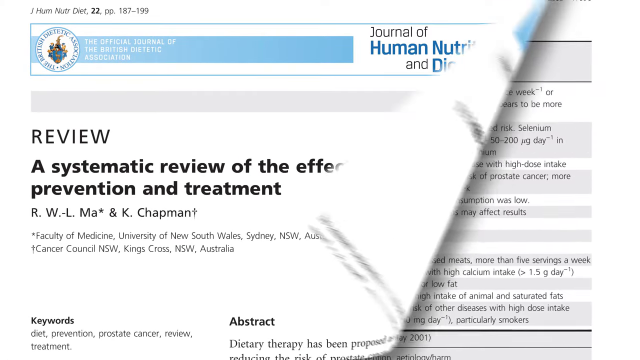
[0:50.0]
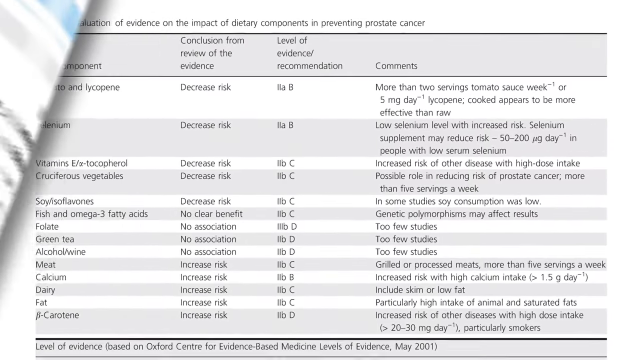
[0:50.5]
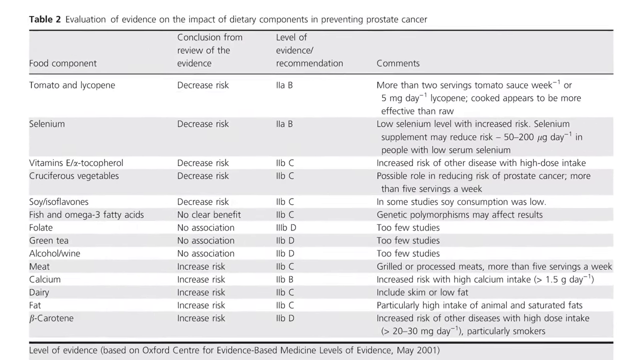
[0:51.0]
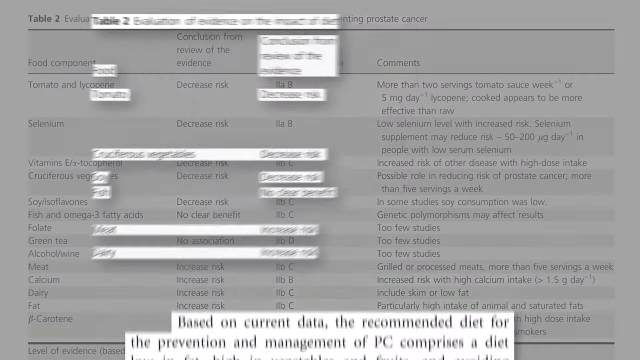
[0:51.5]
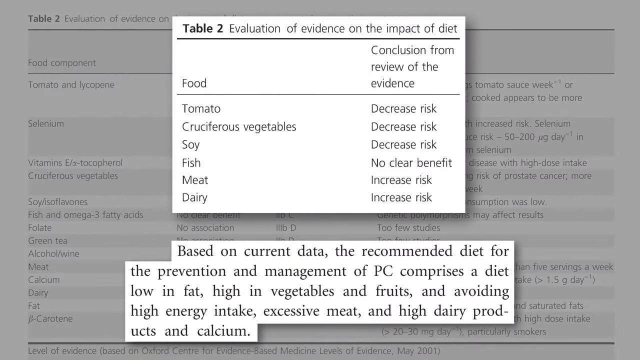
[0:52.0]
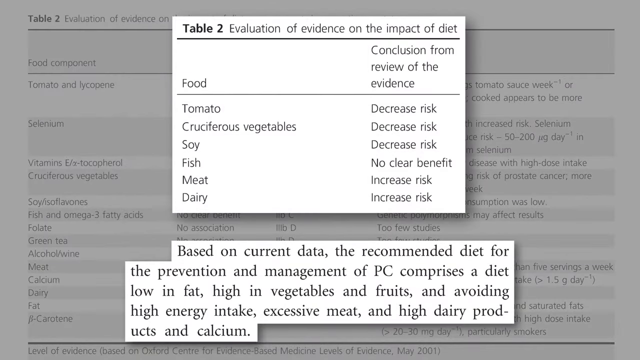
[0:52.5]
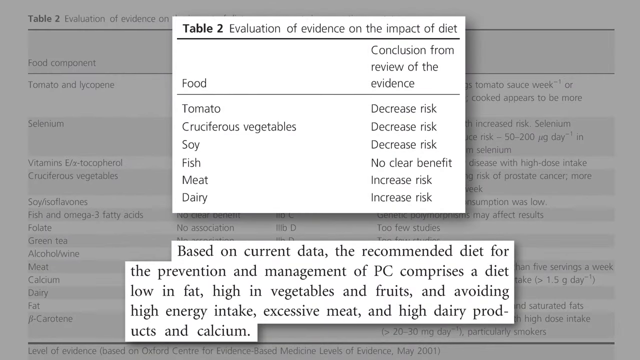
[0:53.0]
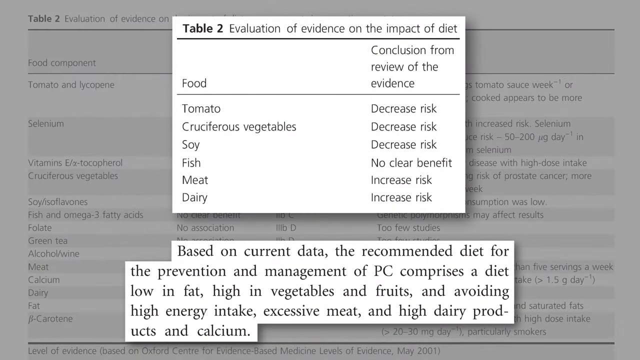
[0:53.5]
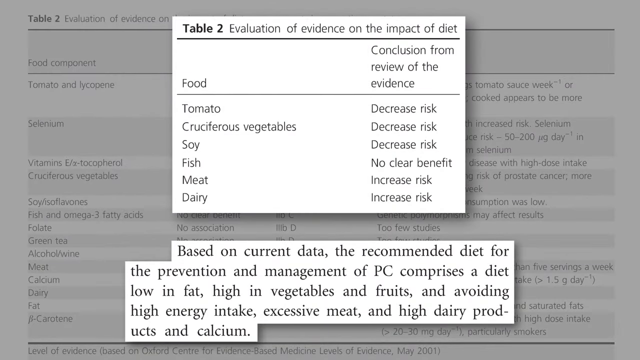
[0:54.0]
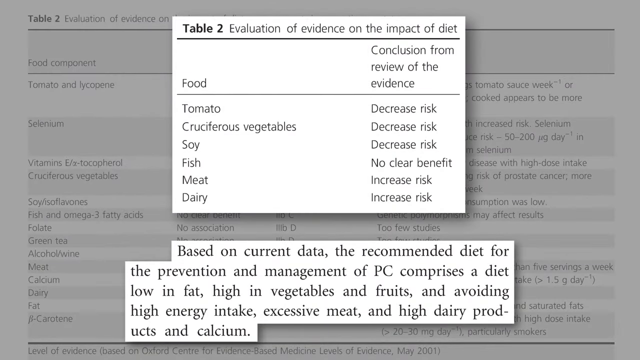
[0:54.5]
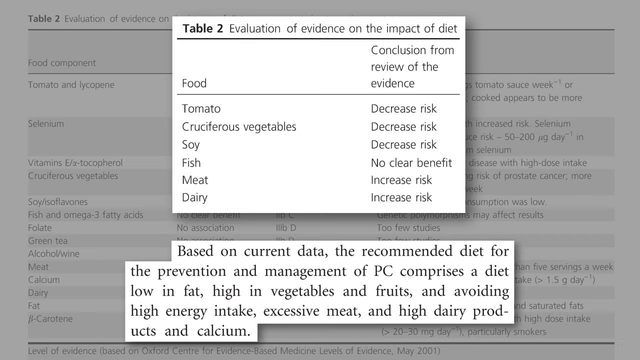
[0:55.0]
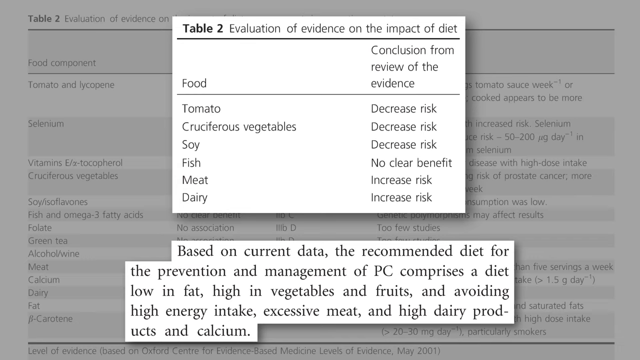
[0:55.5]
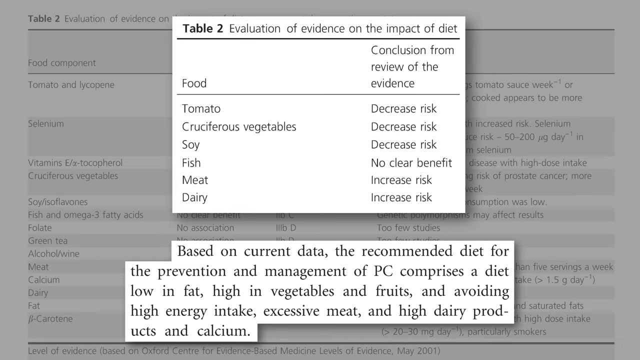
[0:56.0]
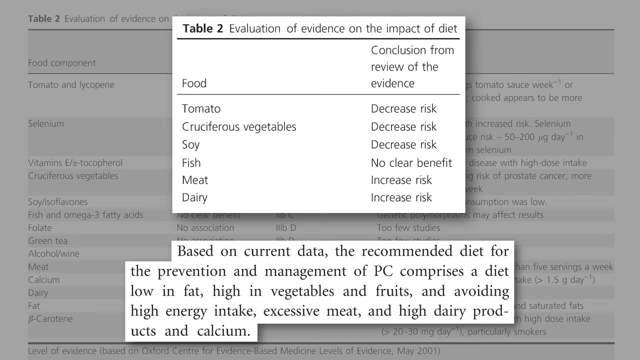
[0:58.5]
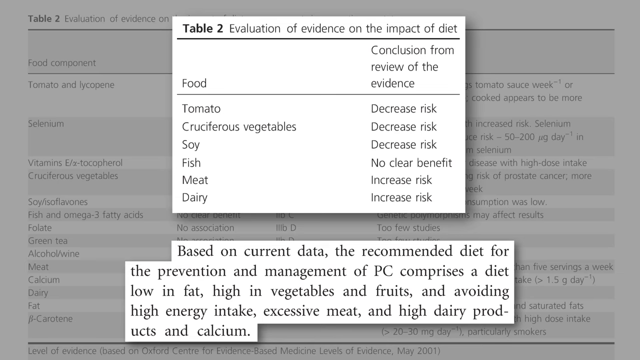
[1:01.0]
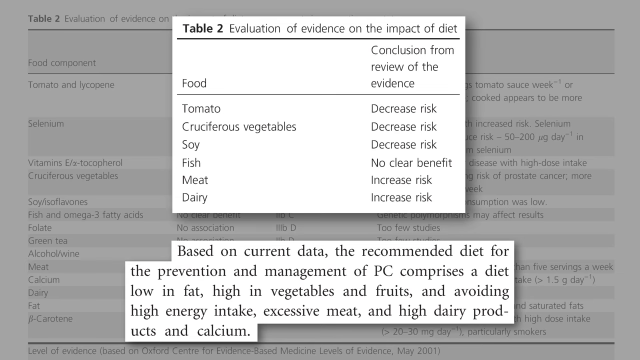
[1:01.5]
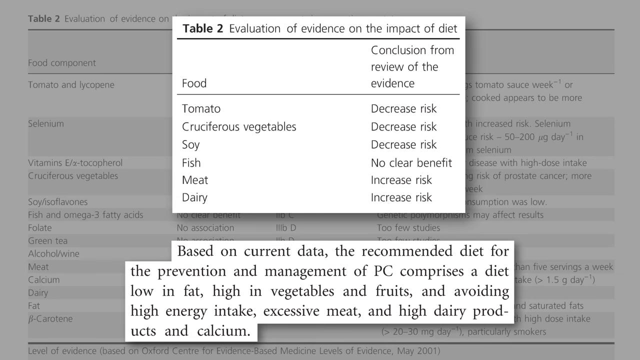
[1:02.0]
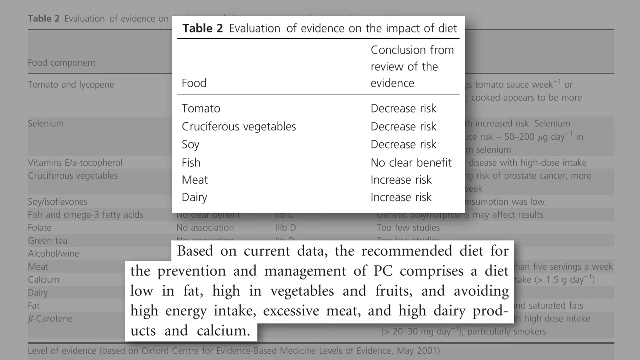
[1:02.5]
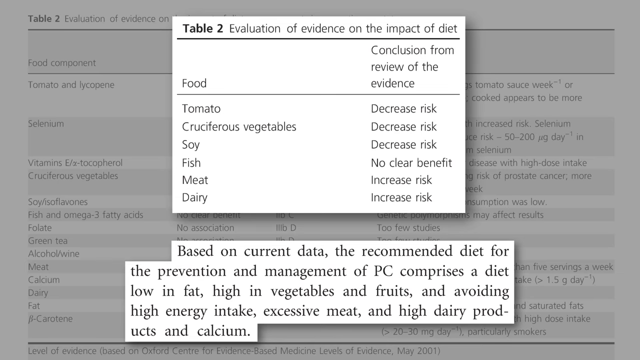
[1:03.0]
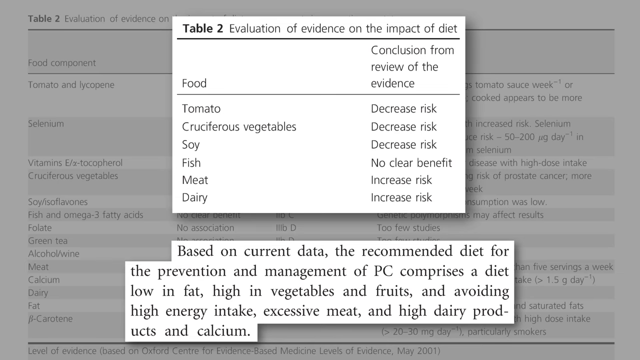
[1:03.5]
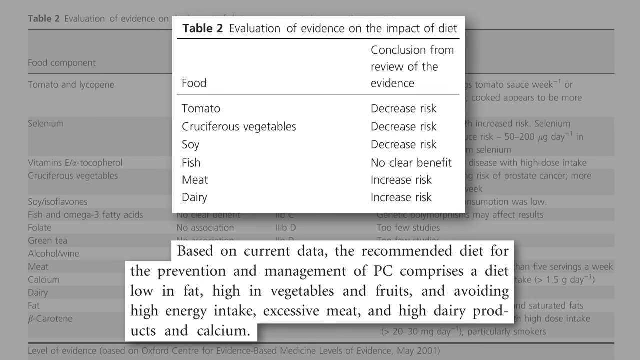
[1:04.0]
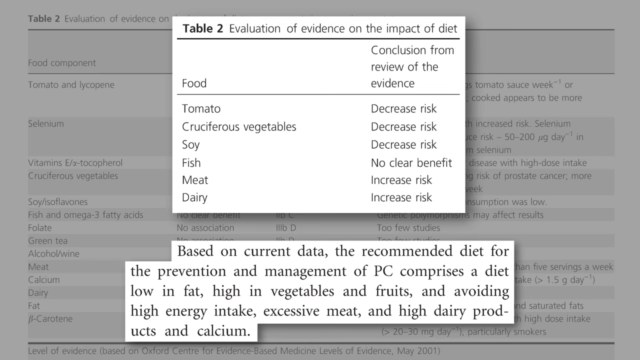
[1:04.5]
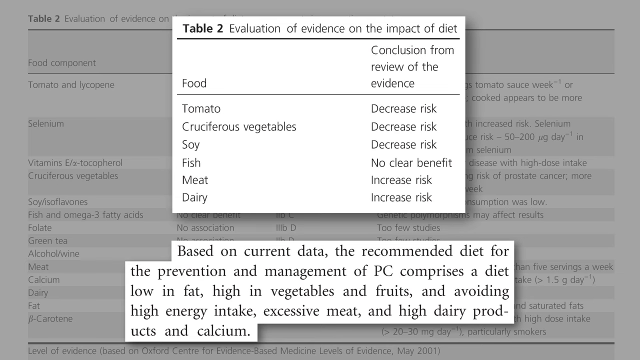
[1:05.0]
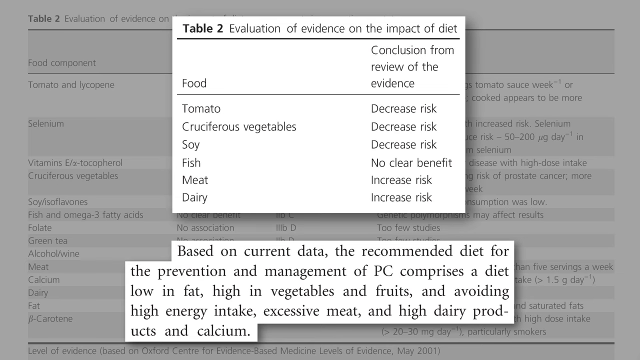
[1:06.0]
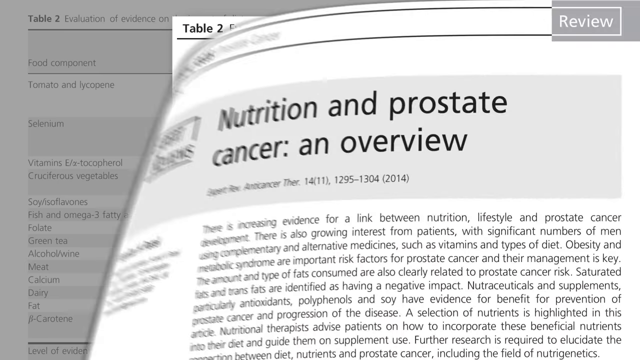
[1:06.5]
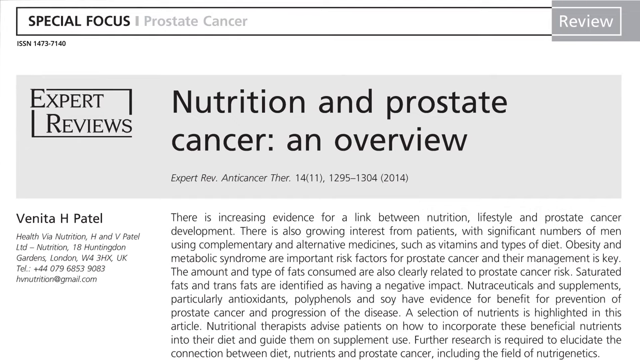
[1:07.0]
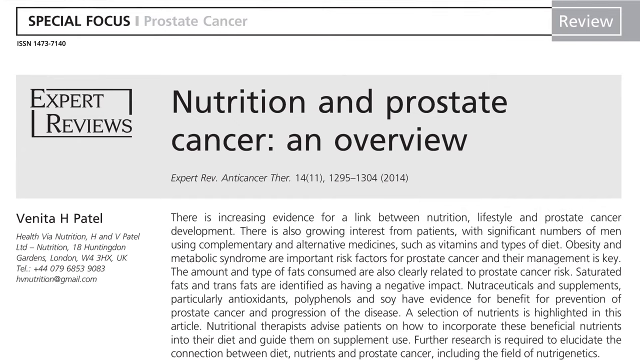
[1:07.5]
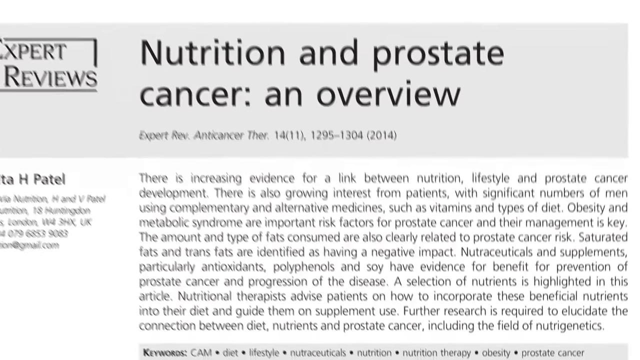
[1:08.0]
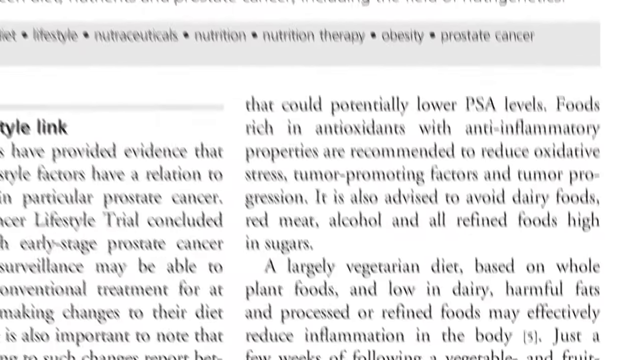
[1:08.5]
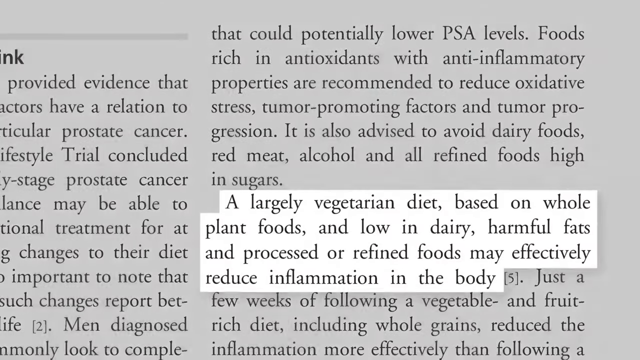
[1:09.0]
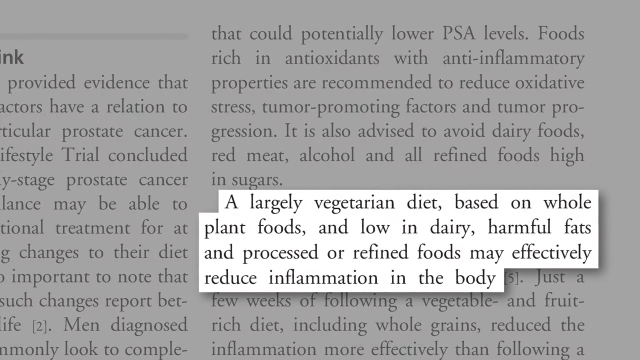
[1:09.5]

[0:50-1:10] A table labeled "Table 2: Evaluation of evidence on the impact of diet" appears, with sections of it cut out and placed in the middle. Its header reads "Food" and "Conclusion from review of the evidence". Tomato, cruciferous vegetables and soy are listed as decreased risk; fish as no clear benefit; and meat and dairy as increased risk. A cutout sentence at the bottom reads "Based on current data the recommended diet for the prevention of and management of PC compromises a diet low in fat, high in vegetables and fruits and avoiding high energy intake, excess meat and high dairy products and calcium." The view stays on this page for a few seconds and then apparently changes to an excerpt of an article from "Special focus: prostate cancer", titled "Nutrition and prostate cancer: an overview", published in 2014, with Vinita H Patel as the primary author. Its first sentence reads "There is increasing evidence for a link between nutrition, lifestyle and prostate cancer development." The camera then zooms in on one sentence of the article: "A largely vegetarian diet based on whole plant foods and low in dairy, harmful fats and processed or refined foods may effectively reduce inflammation in the body."